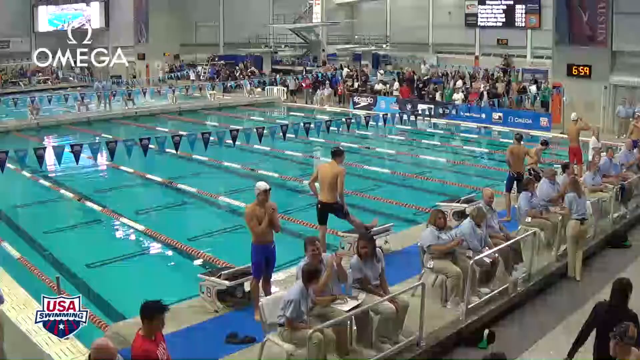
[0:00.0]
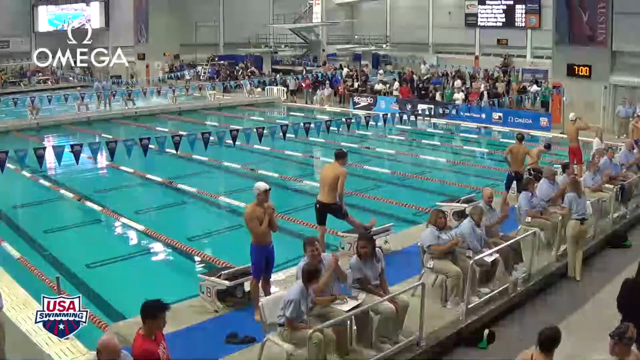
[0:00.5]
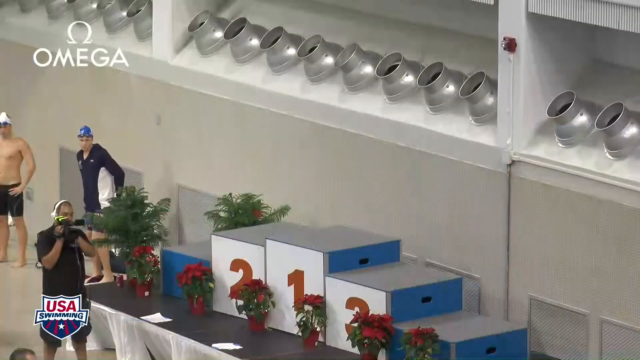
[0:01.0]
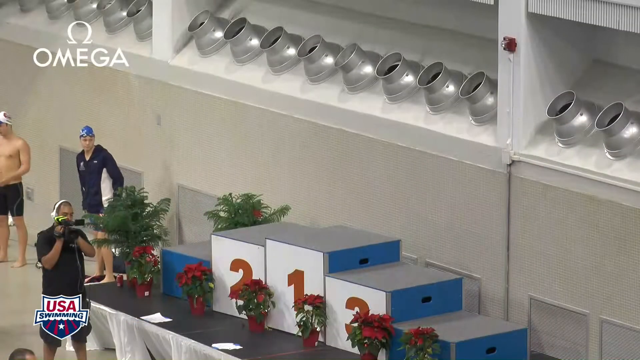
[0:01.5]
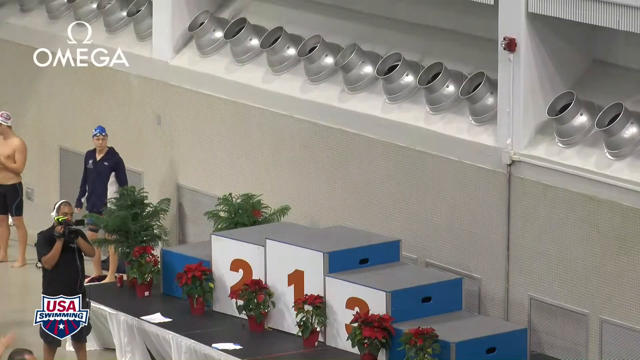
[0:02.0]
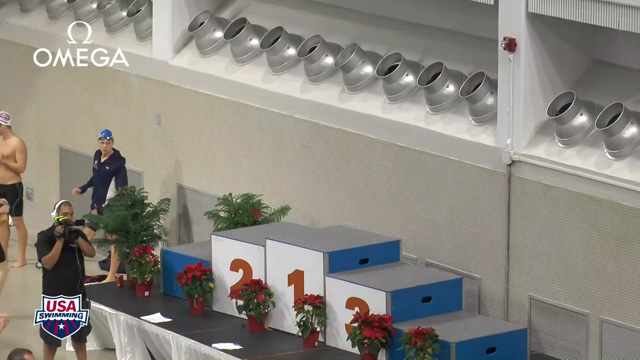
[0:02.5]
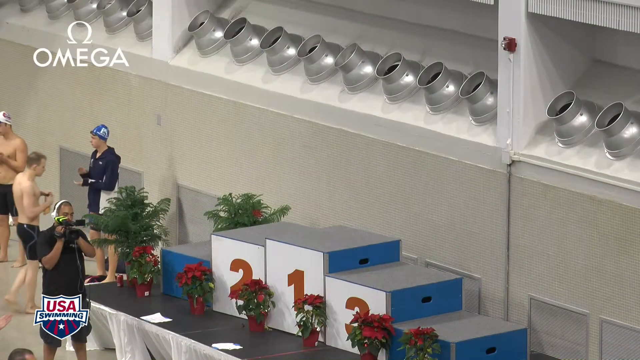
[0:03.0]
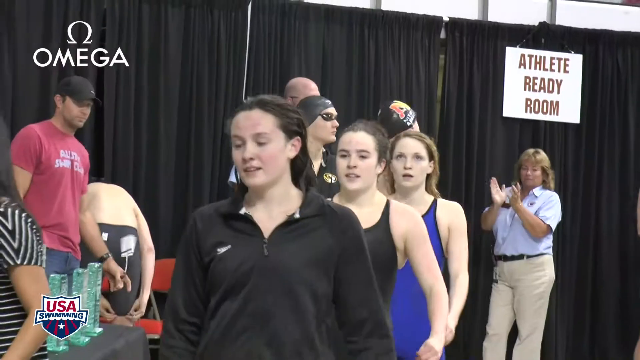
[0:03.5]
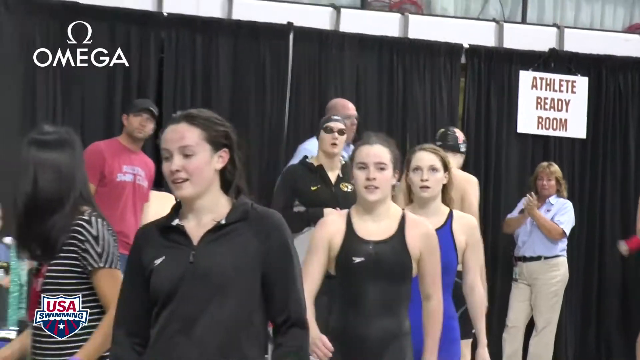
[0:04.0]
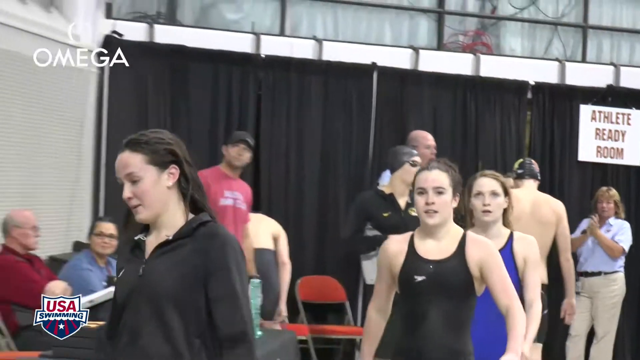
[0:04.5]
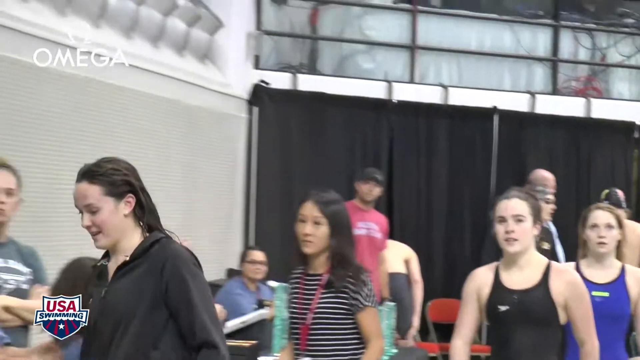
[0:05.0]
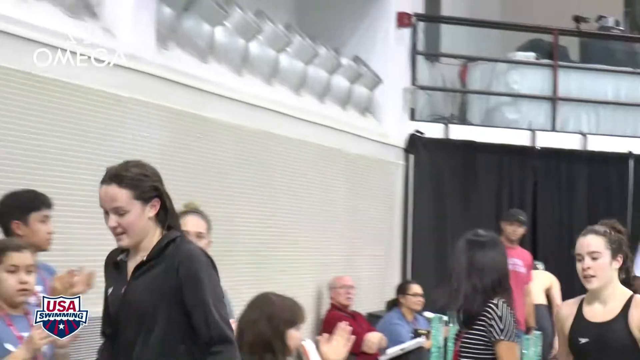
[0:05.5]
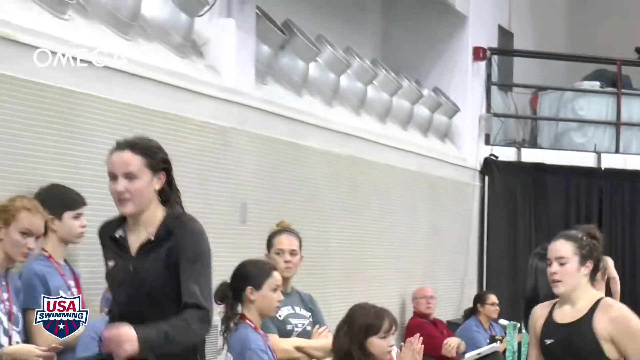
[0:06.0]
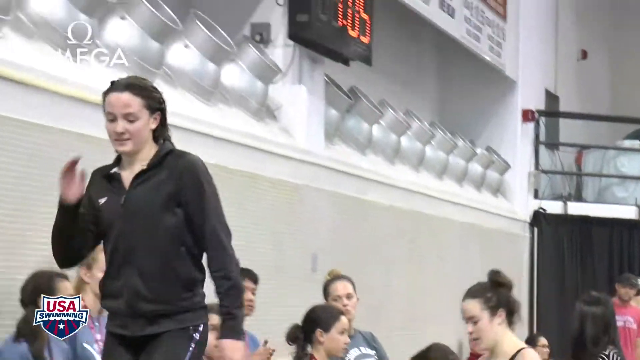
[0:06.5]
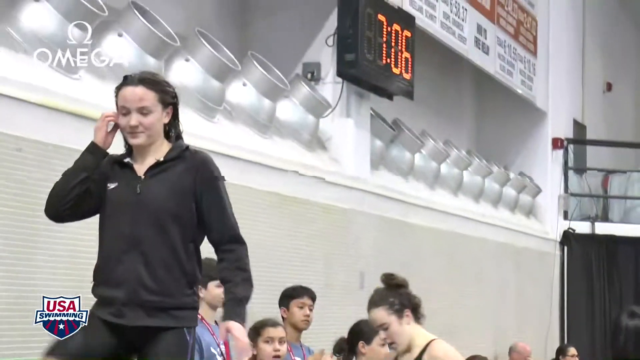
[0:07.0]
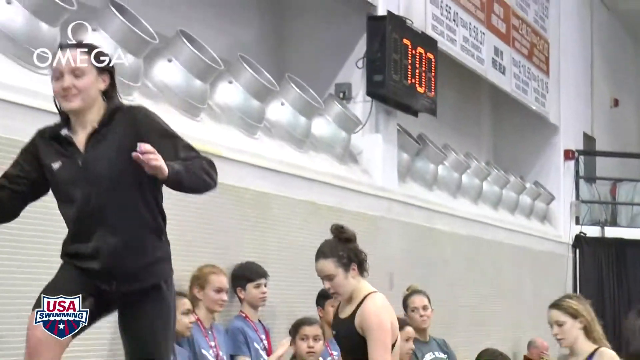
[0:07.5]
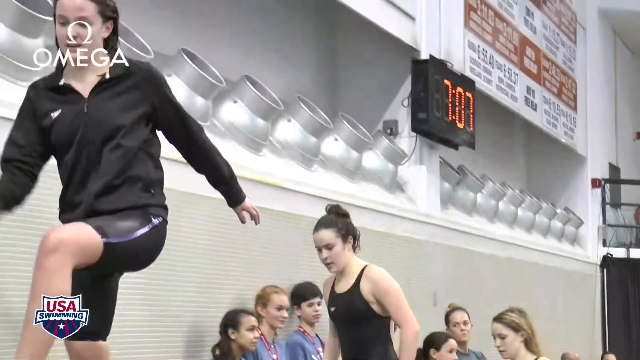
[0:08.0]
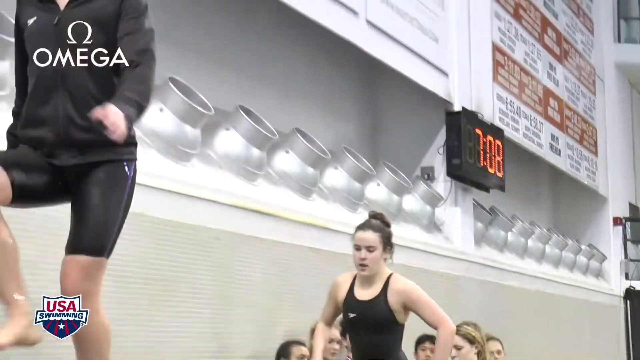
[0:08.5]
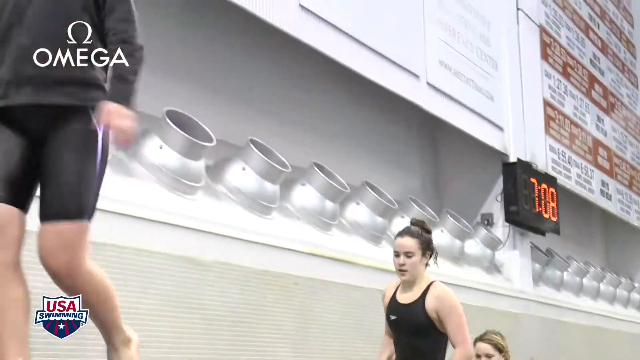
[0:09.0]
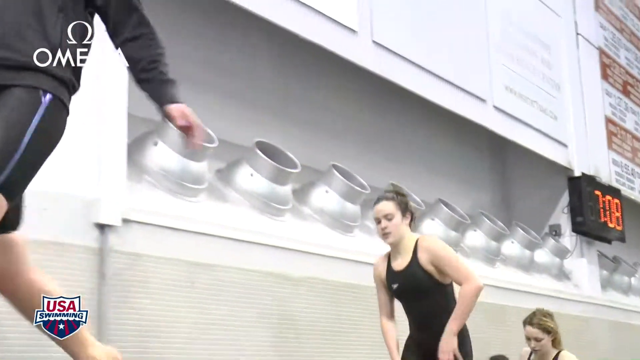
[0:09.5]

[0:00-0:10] A wide shot shows a swimming meet. A couple of logos are superimposed on the left side of the screen: the USA swimming logo in the top left and the Omega logo, with a horseshoe over the word "Omega". In view are apparently six swimmers preparing to jump into the pool. In front of them sits a series of people, upwards of 15, facing away from the pool, all wearing white golf shirts with tan pants; they appear to be coaches or officials of some kind. In the far background, along the right side of the pool, are spectators; the venue is not a huge auditorium, with perhaps a hundred spectators in total. A clock in the background reads "6.59". The scene then shows an Olympic-style podium with the numbers 1, 2 and 3 on its different boxes, and poinsettias lined up along its front. A couple of swimmers are in the background, and a cameraman is in the foreground.